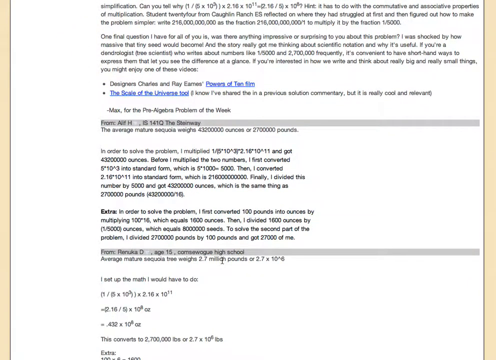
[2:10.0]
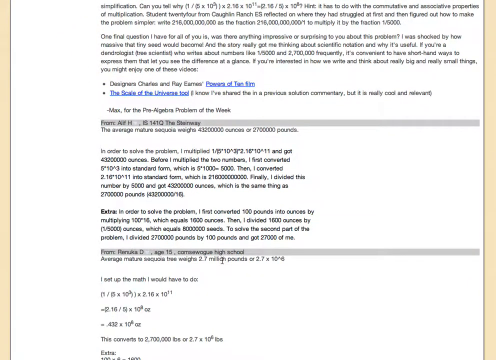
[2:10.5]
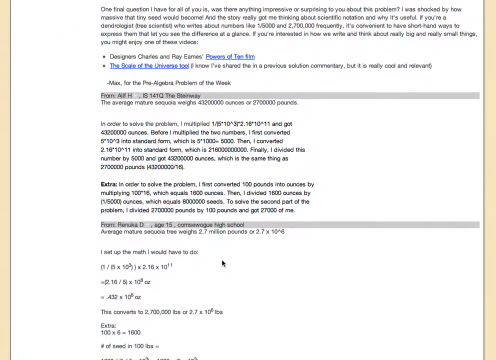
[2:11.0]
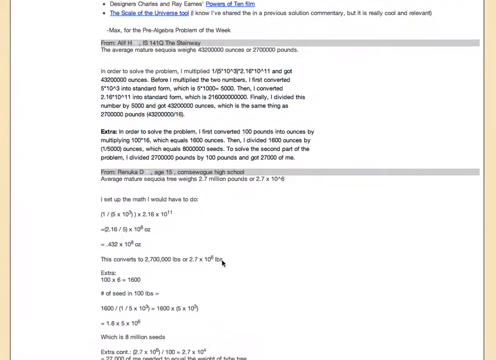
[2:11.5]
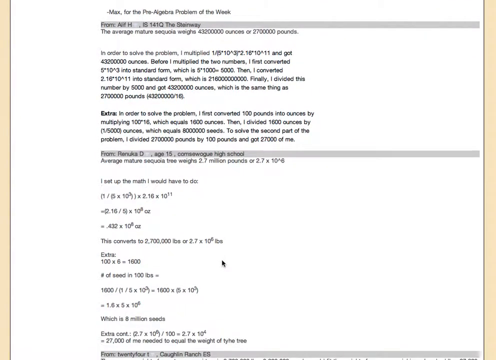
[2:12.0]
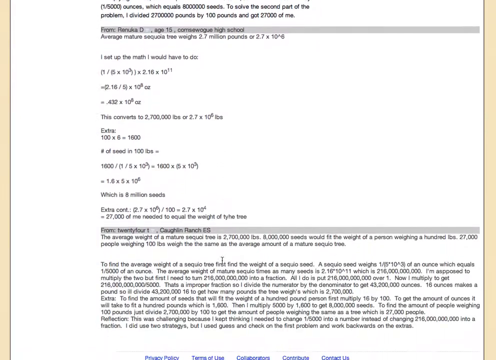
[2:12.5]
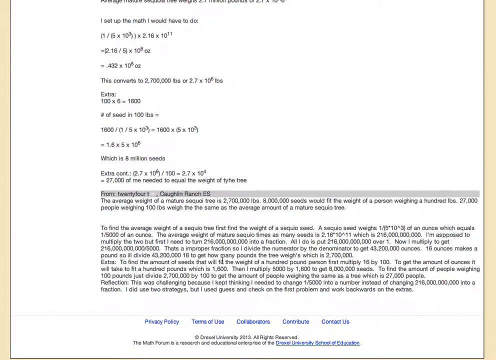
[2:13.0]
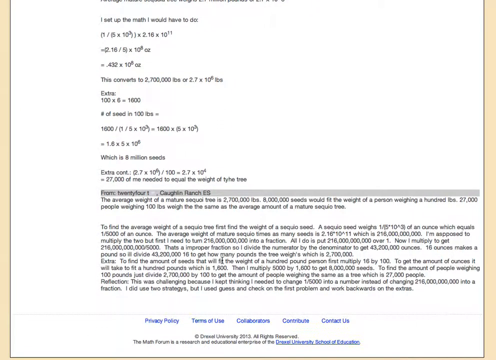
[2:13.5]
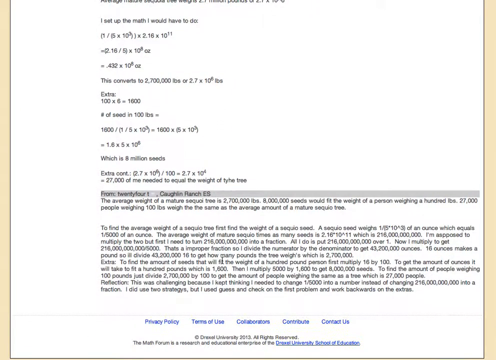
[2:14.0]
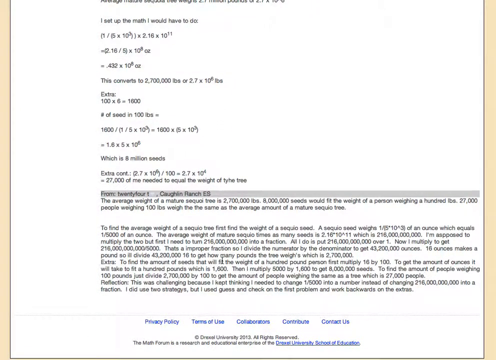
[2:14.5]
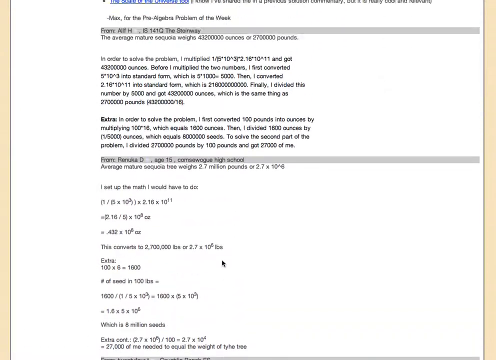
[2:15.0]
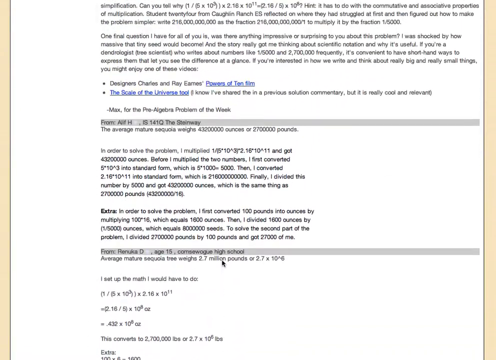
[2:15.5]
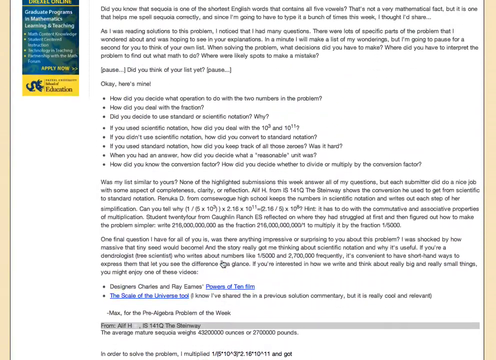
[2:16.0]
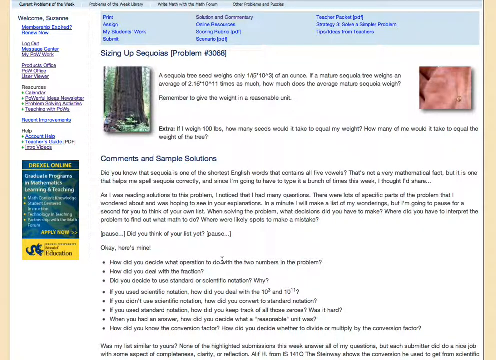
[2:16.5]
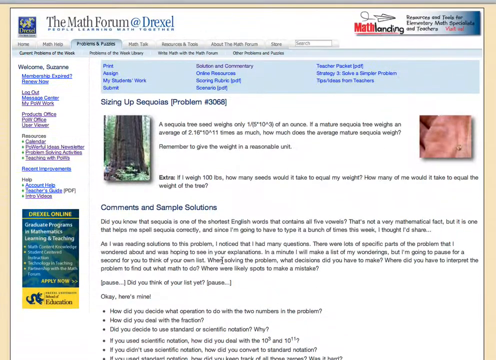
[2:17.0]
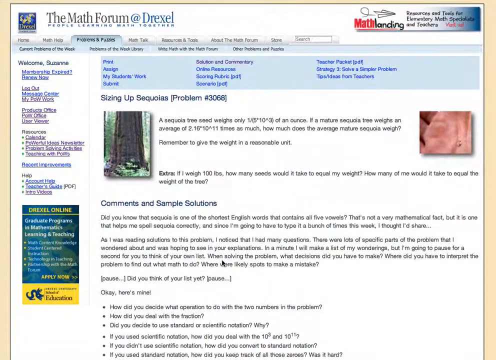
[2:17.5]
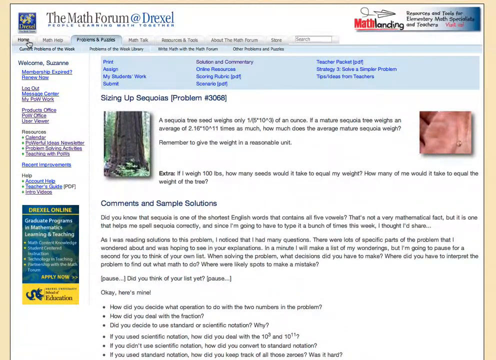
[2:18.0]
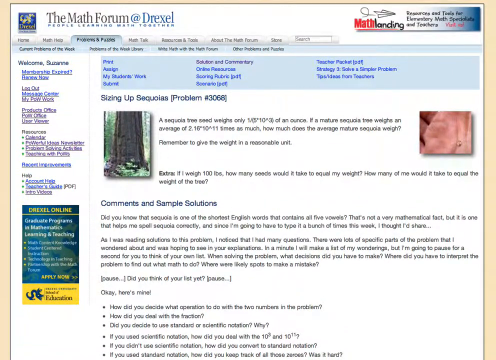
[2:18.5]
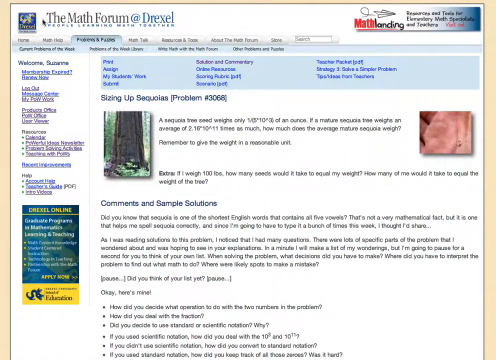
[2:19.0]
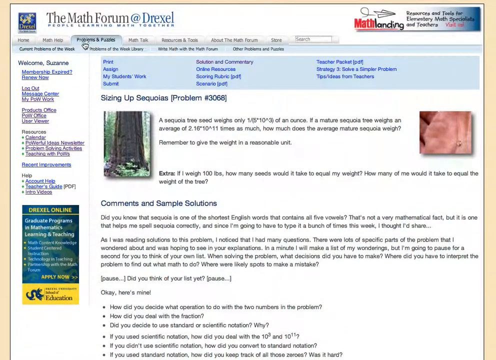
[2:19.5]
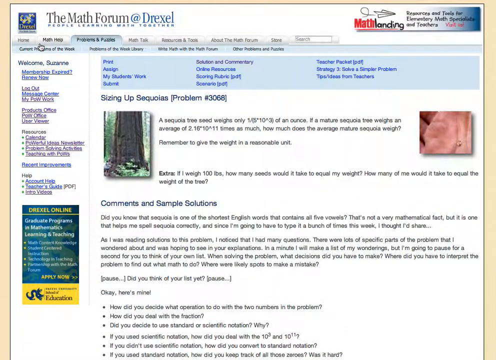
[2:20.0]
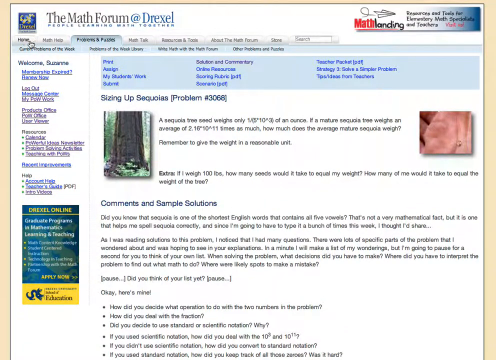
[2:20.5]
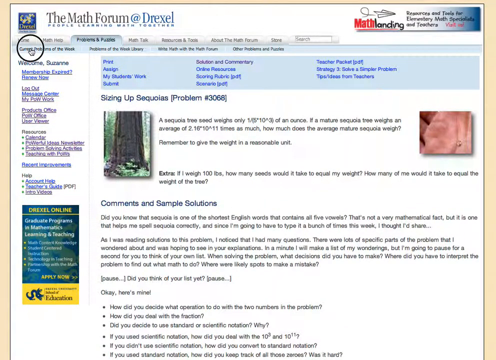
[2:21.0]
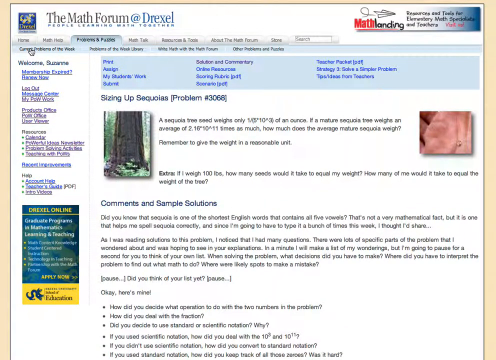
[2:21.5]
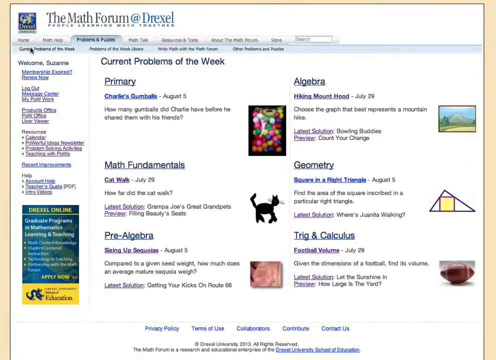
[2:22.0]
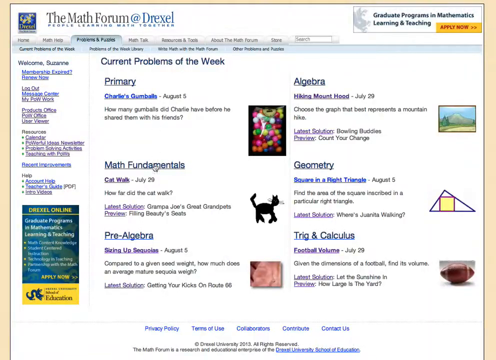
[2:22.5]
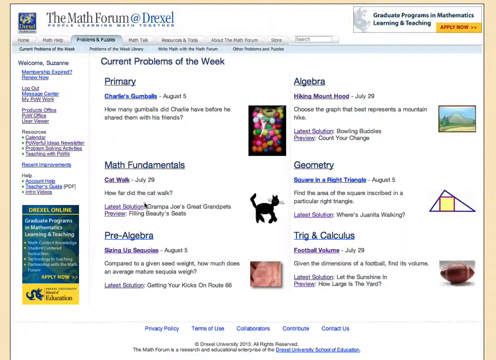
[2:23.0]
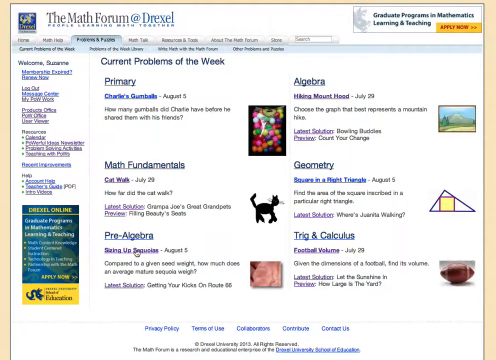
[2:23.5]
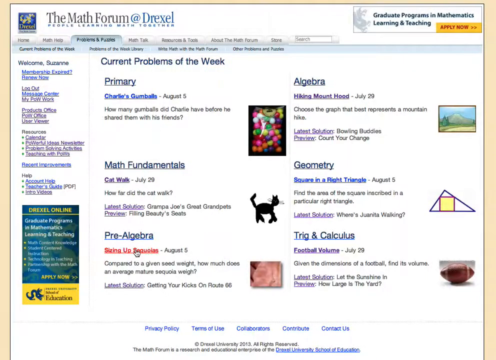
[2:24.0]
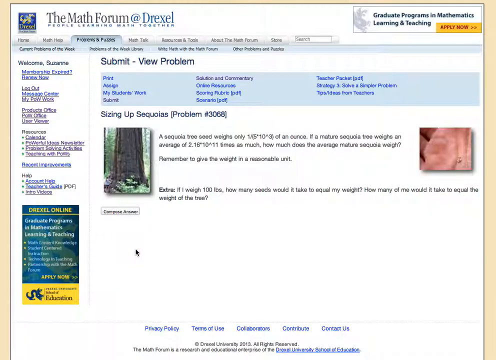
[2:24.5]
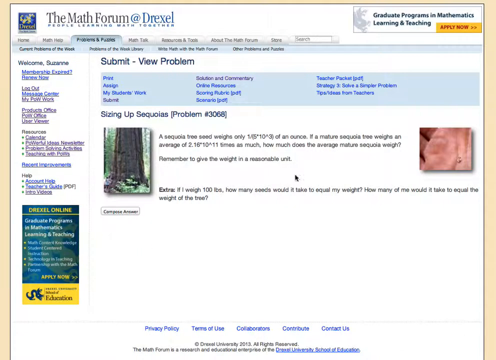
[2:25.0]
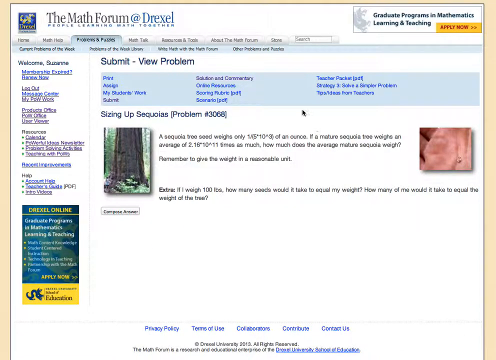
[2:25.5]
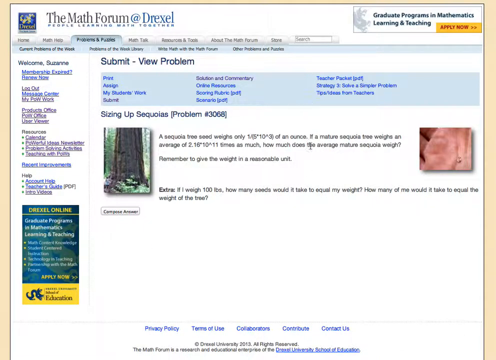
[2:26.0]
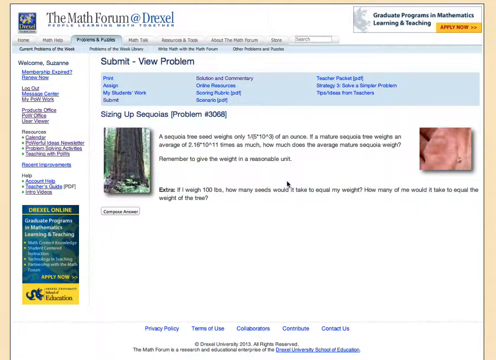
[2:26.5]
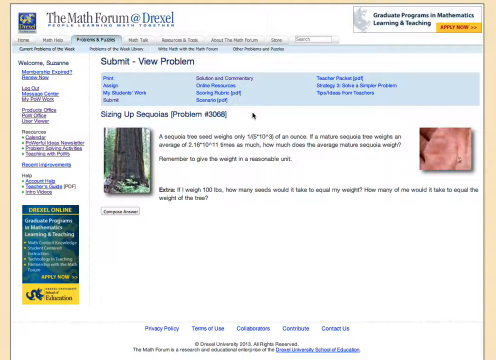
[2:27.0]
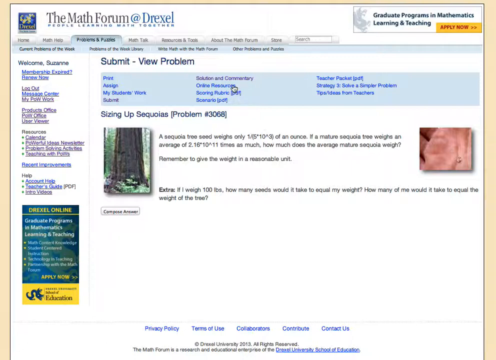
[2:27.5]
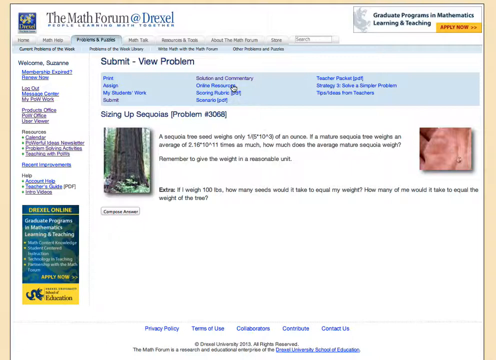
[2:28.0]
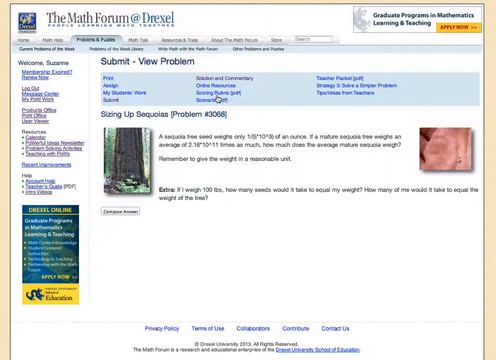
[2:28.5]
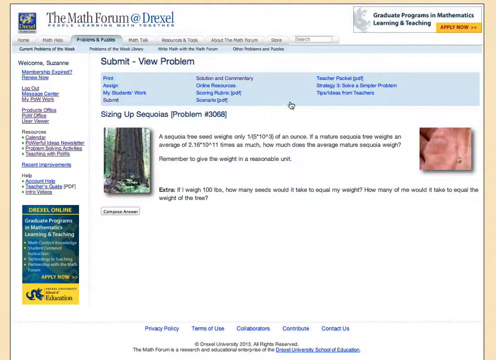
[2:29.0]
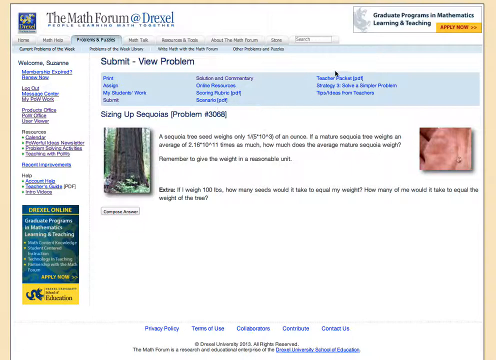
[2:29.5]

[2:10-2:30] Poor-resolution text appears, possibly on a webpage. It looks like a document at first, but it is scrolled down, apparently with a mouse scroll wheel. Some of the somewhat blurry text can be read: "in order to solve the problem, I multiplied," followed by a series of formulas, and then what appears to be "432 million ounces." Next it reads "Before I multiplied the two numbers, I first converted," followed by a math formula, "into standard form," and another formula. Then it reads "I converted" another formula "into standard form," followed by a huge, blurry number whose zeros are hard to count. After that it says "finally, I divided this number by 5,000" and shows another big number, 432 million ounces, "which is the same thing as 270 million pounds." Further text reads "in order to solve the problem, I first converted 100 pounds into ounces by multiplying 100 times 16, which equals 1,600 ounces," and the text continues working through a math problem.